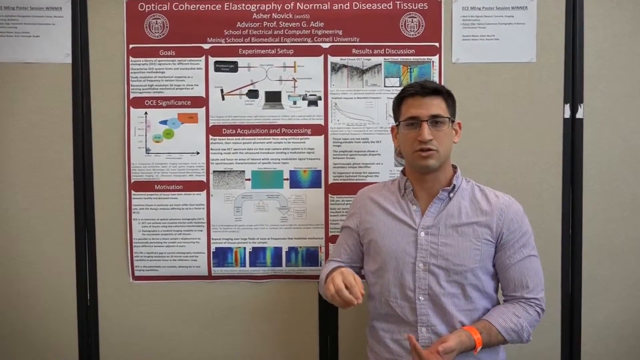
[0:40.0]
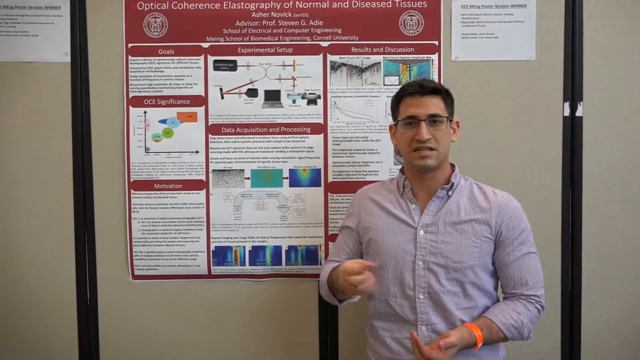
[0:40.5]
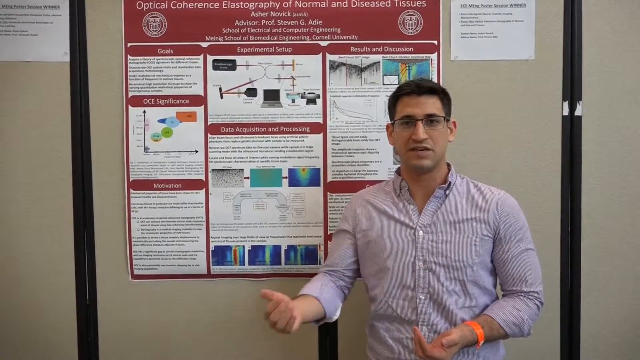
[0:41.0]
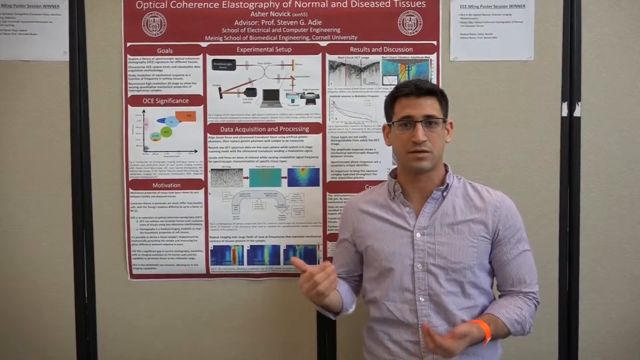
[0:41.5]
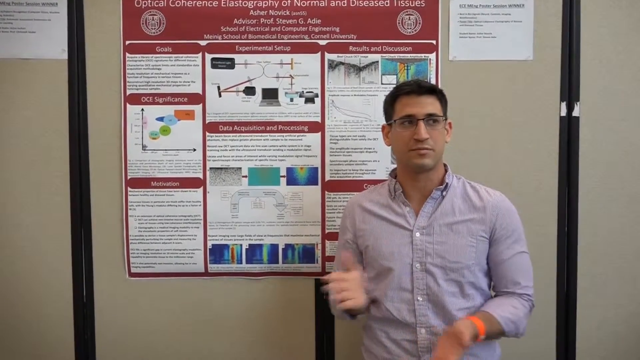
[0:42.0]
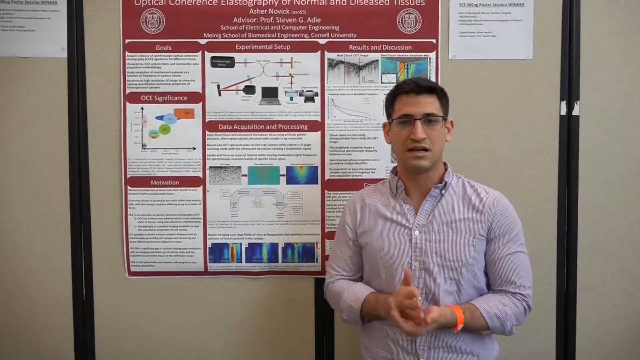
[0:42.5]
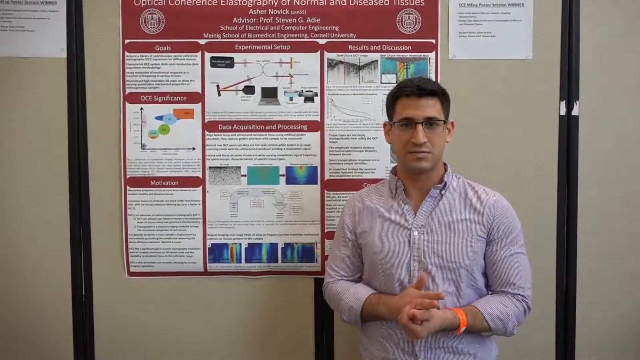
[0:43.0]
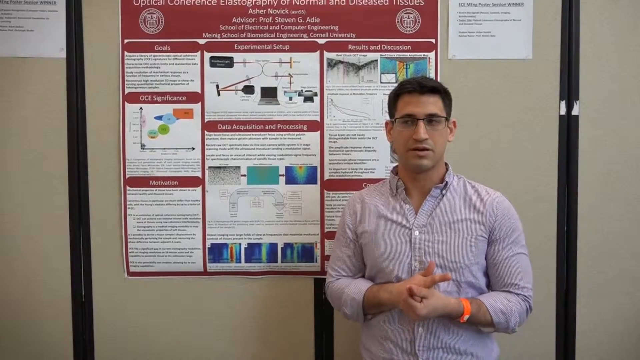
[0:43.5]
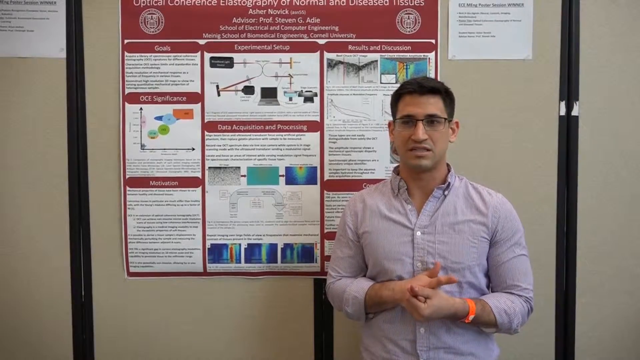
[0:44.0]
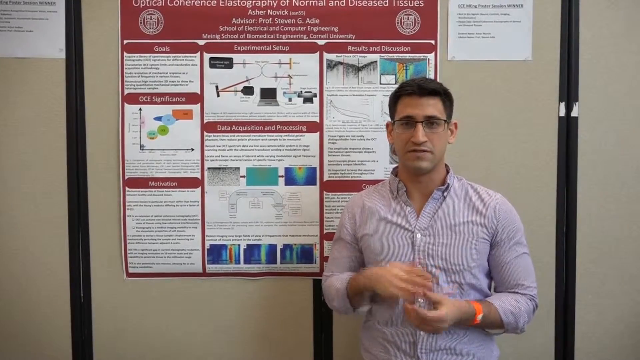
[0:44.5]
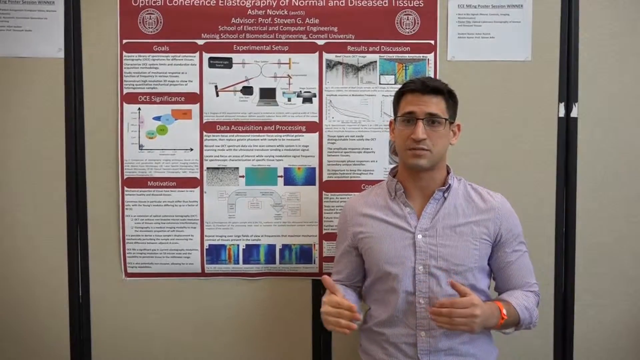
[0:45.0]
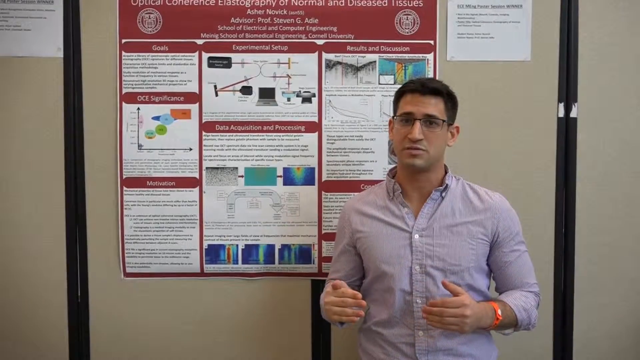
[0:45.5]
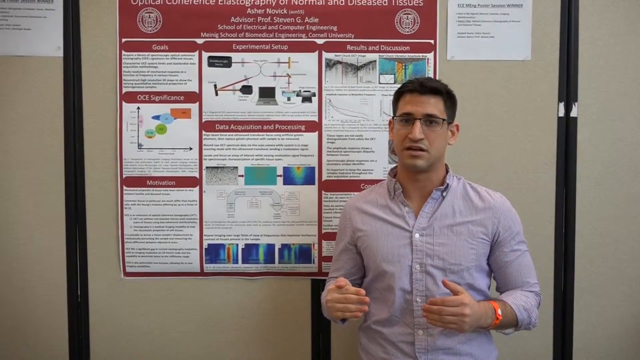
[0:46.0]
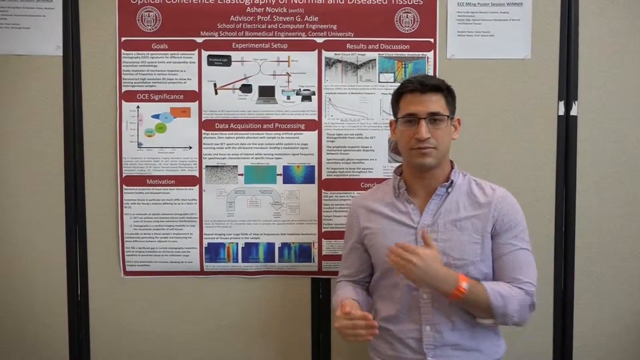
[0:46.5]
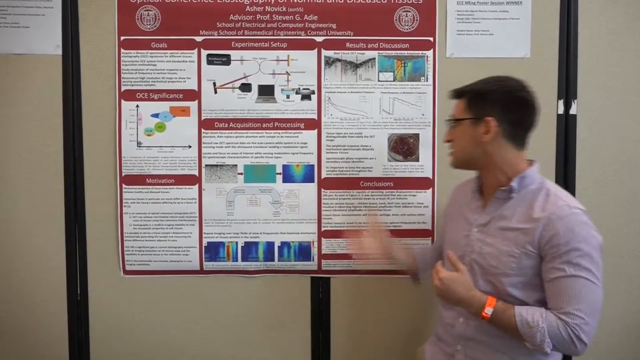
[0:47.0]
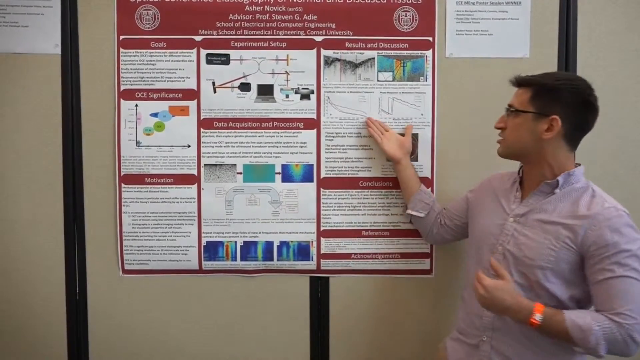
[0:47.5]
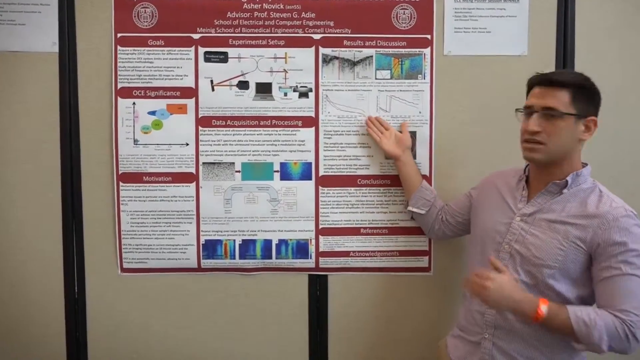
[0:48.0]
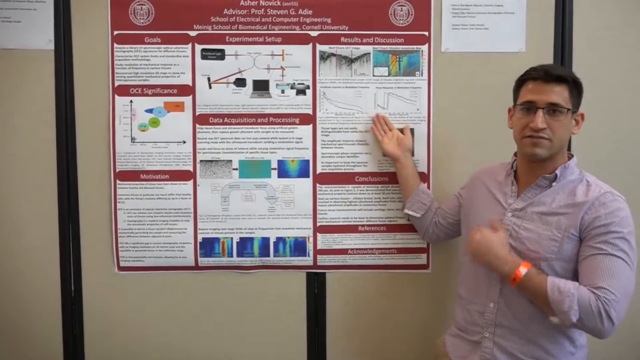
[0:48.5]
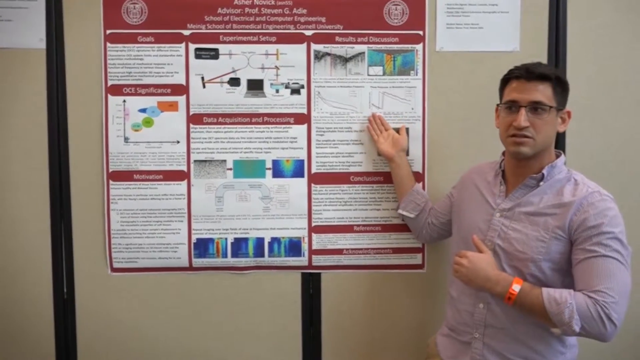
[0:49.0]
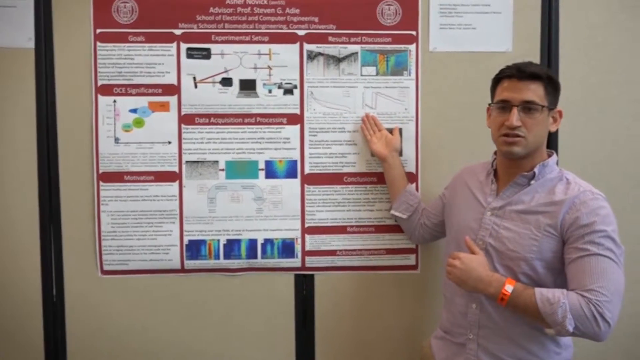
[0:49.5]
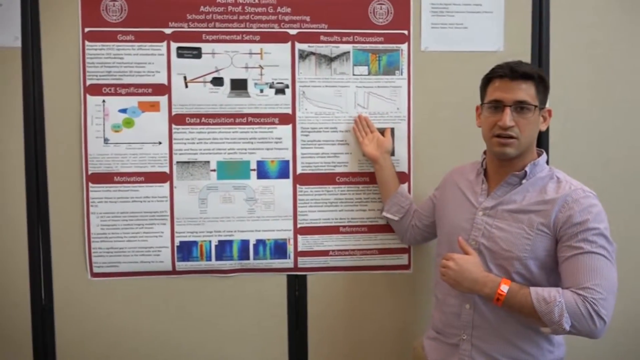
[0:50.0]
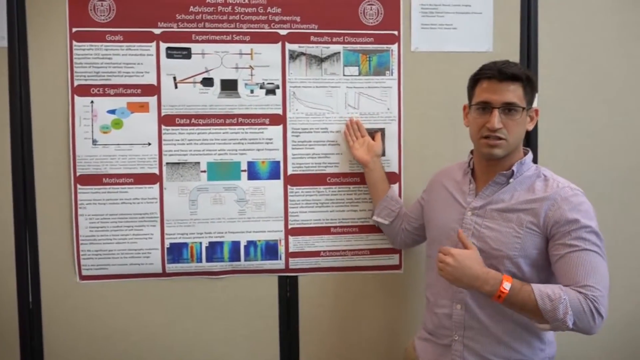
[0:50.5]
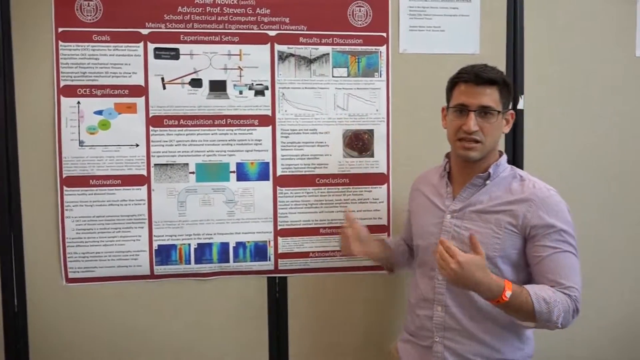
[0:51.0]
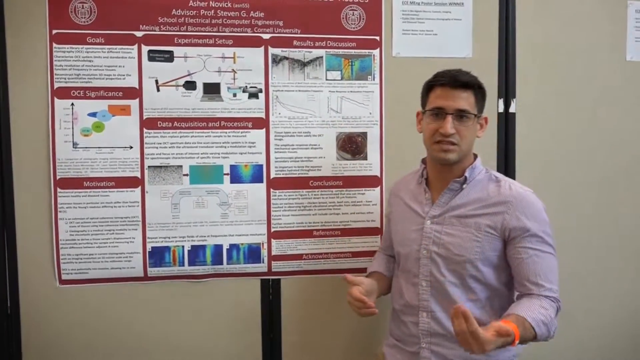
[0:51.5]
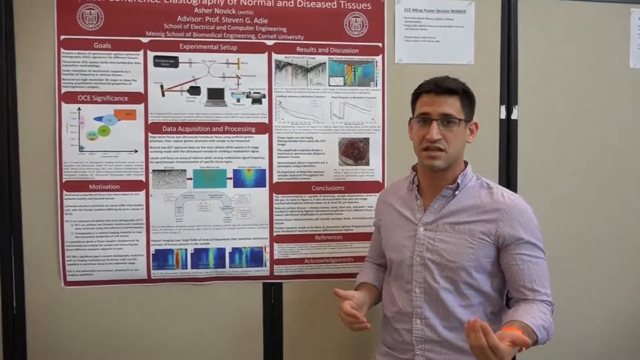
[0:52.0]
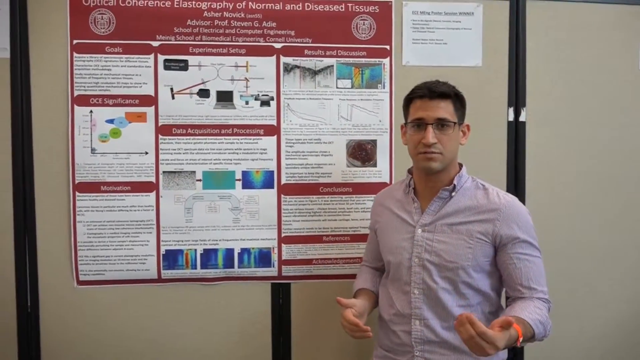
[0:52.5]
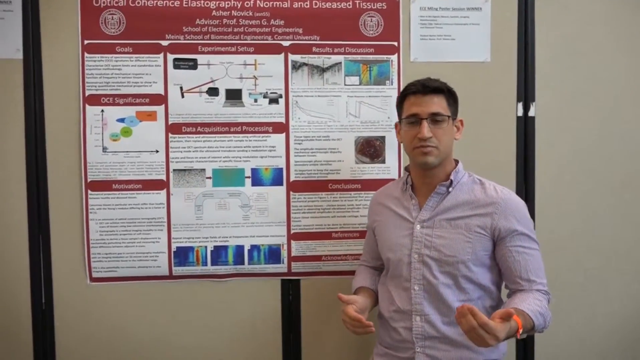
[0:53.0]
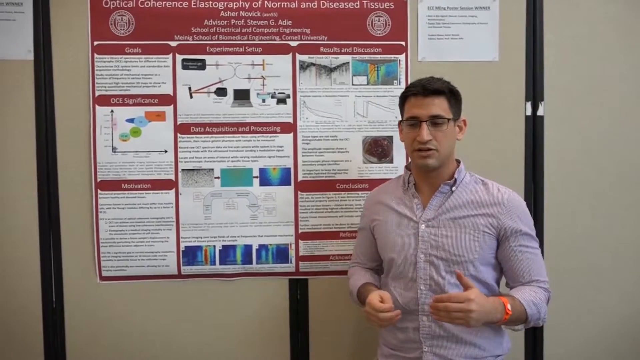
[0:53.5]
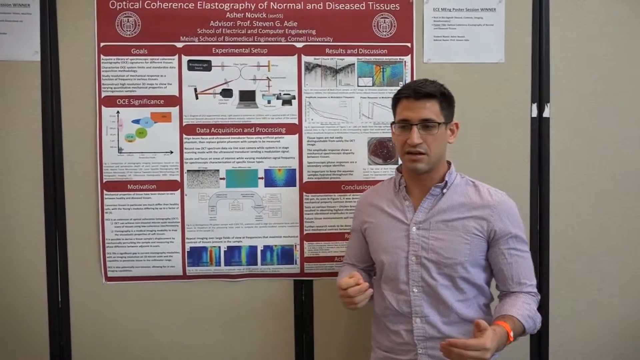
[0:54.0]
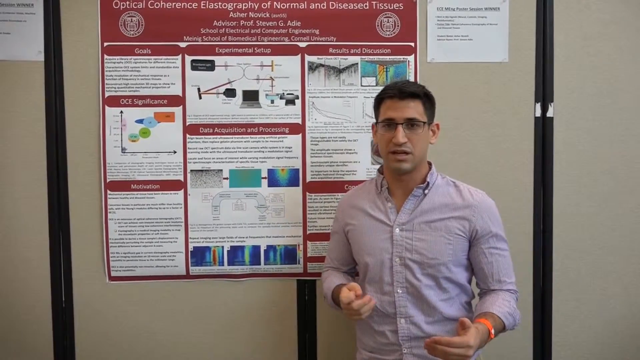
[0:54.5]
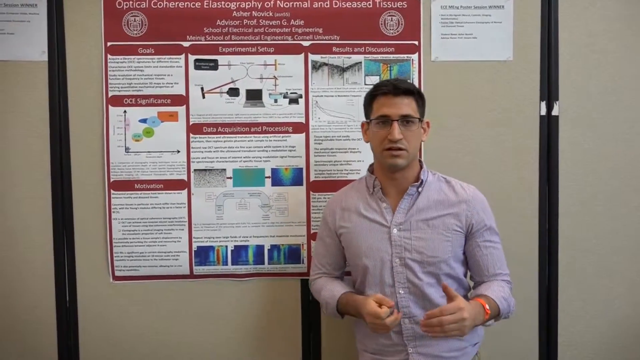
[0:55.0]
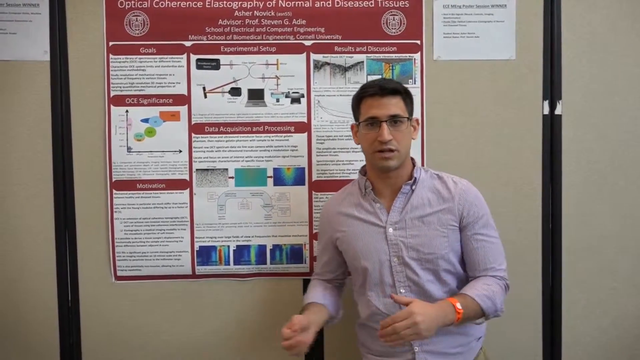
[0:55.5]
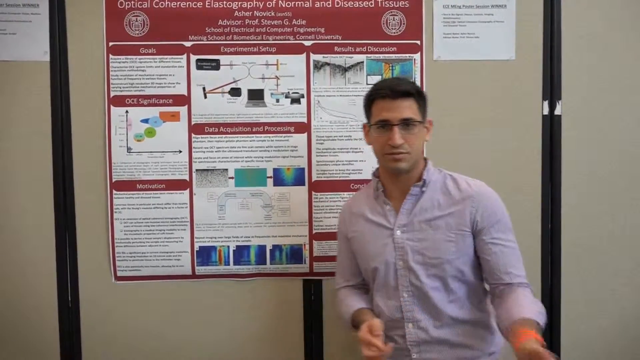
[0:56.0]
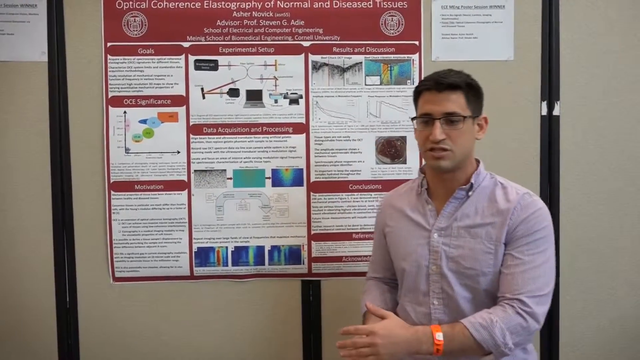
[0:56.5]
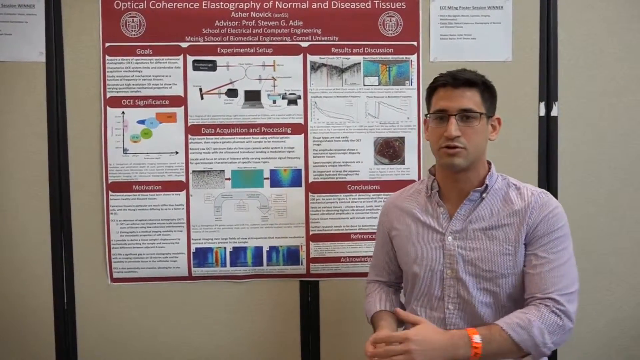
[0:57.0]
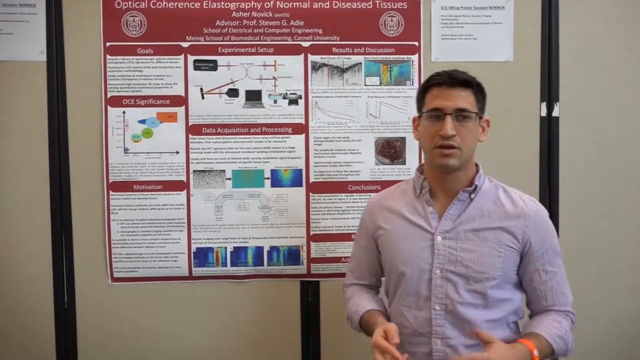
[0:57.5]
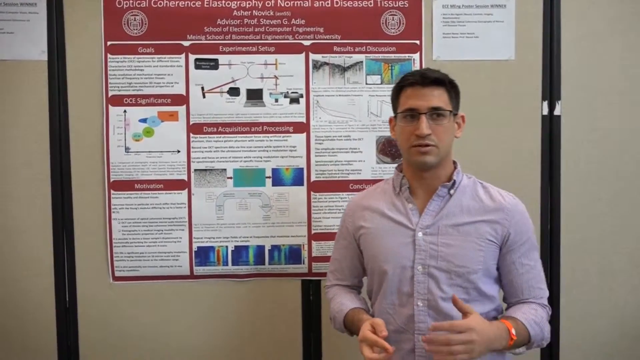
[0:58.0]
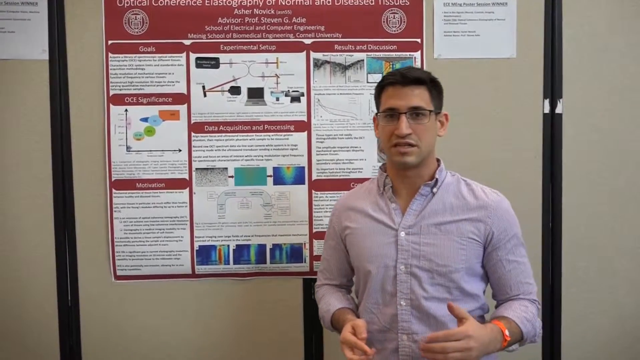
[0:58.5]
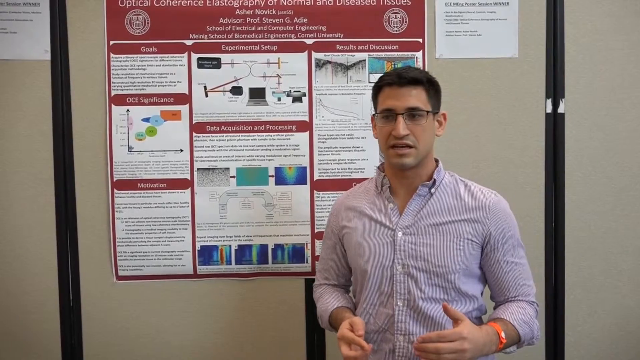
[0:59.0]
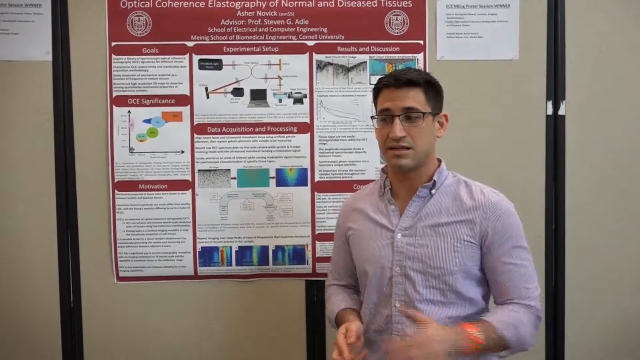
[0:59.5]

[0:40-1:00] A man stands against a beige wall with two white signs on it. There is a chart in front of him reading "optical coherence elastography of normal and diseased tissues" and "Asher Novick," along with his advisor's name, Steven G. The chart has different graphics on it. He speaks while moving his hands back and forth and up and down. He wears an orange bracelet on his wrist, which looks like a bracelet for getting into the event. He points at different objects on the chart, then moves his hands while looking straight ahead at the camera, making a cutting motion with his hand like a timeout sign. He points at things on the third part of the chart, then speaks again, moving his hands up and down, back and forth, left and right. He seems very comfortable talking and uses his hands a lot. He holds his pinky, then points at the chart again, showing the different diagrams.